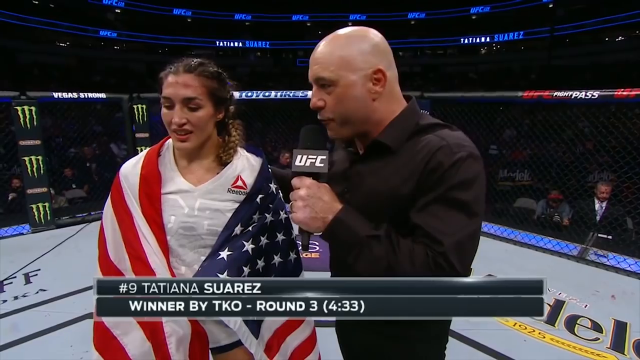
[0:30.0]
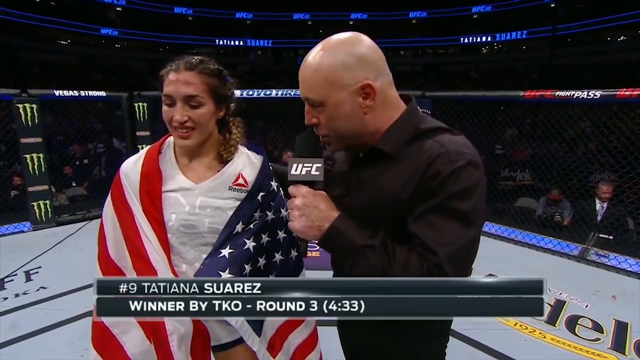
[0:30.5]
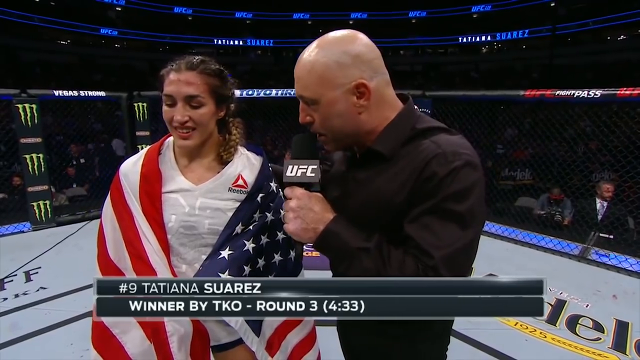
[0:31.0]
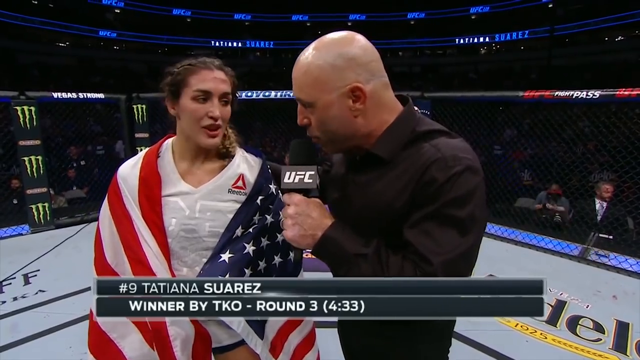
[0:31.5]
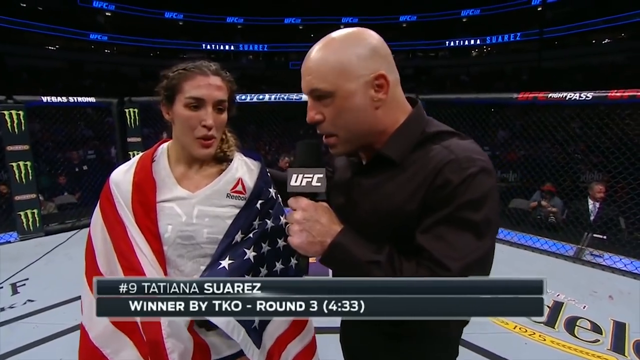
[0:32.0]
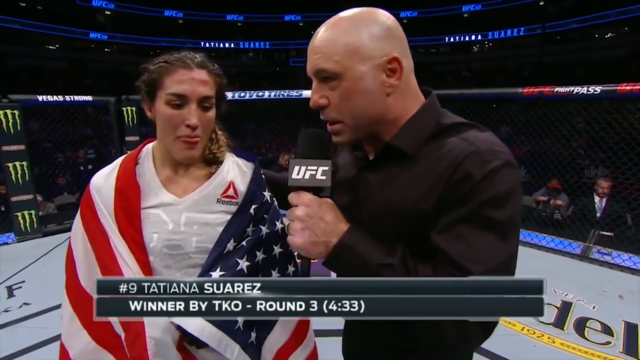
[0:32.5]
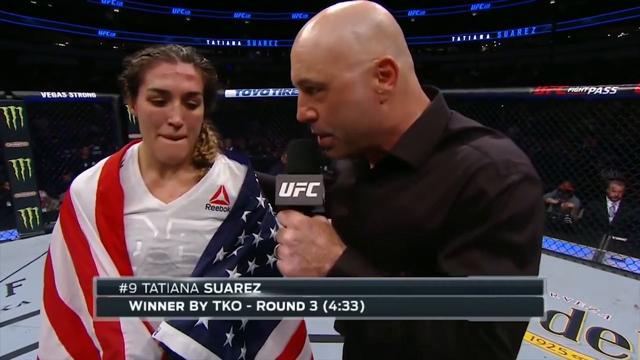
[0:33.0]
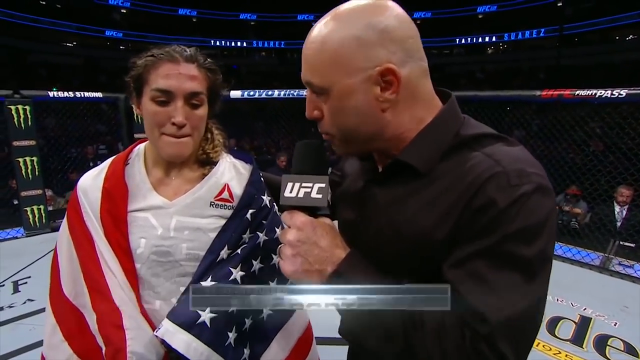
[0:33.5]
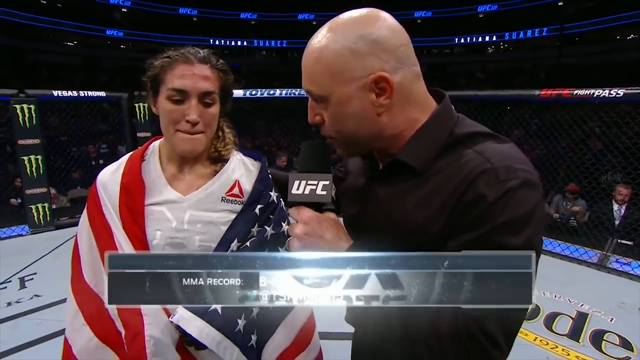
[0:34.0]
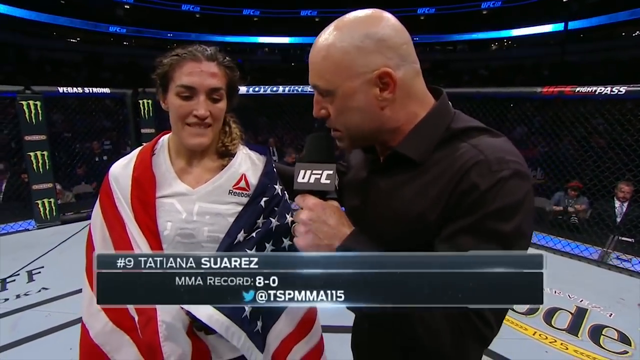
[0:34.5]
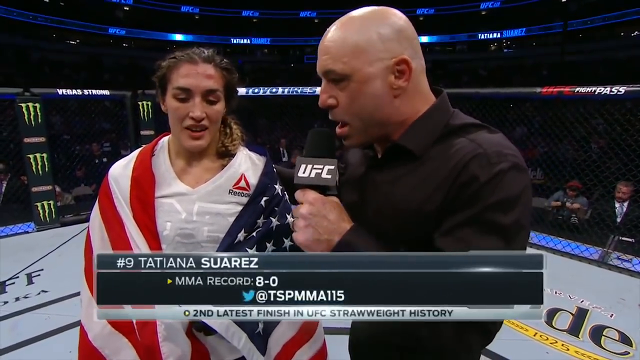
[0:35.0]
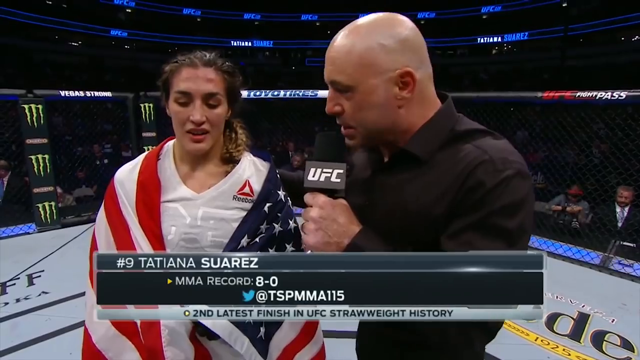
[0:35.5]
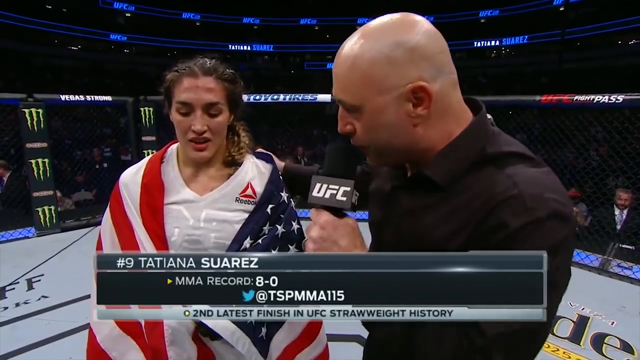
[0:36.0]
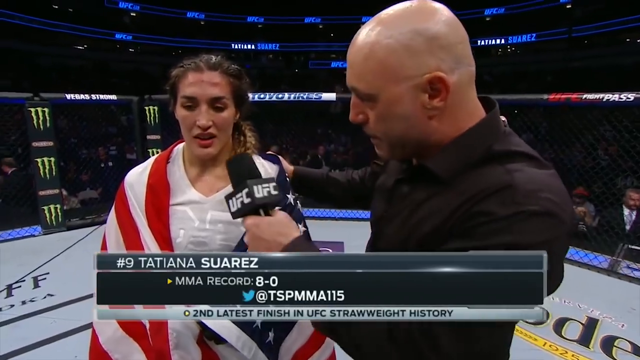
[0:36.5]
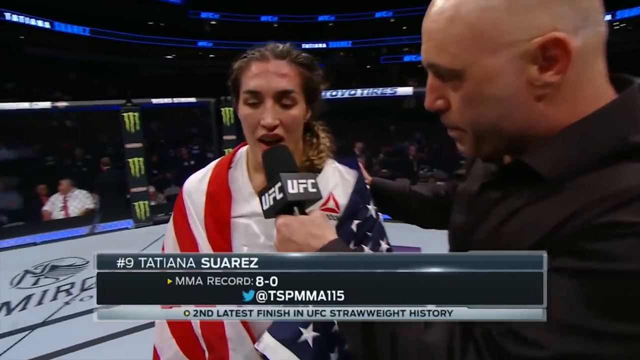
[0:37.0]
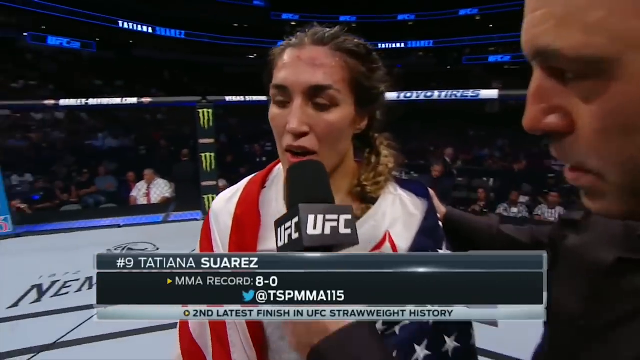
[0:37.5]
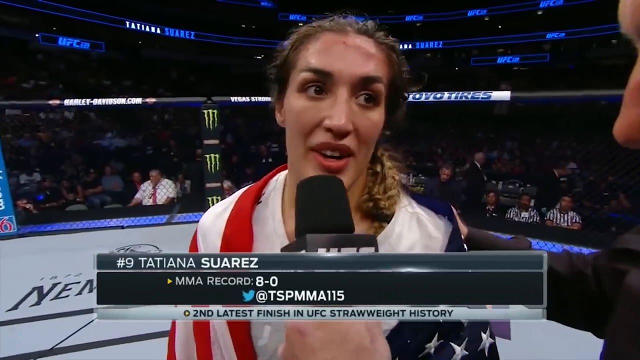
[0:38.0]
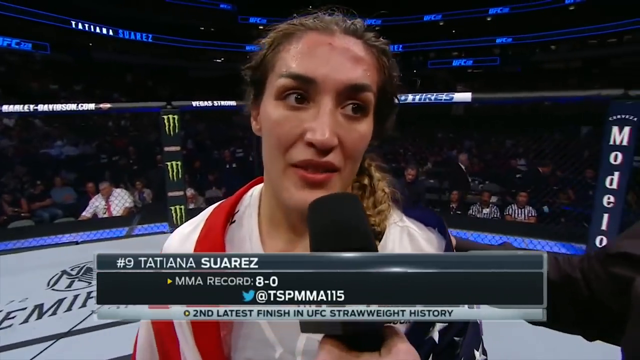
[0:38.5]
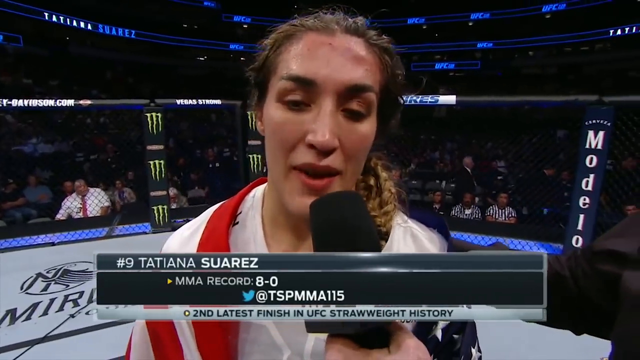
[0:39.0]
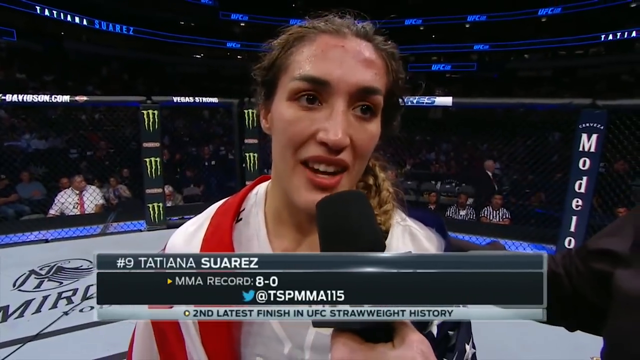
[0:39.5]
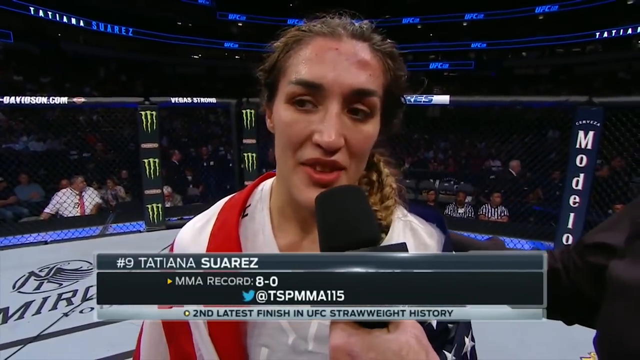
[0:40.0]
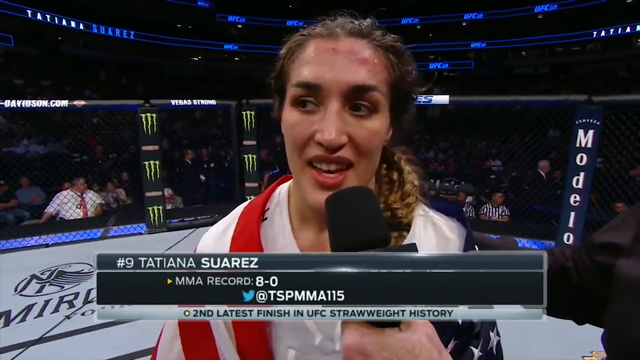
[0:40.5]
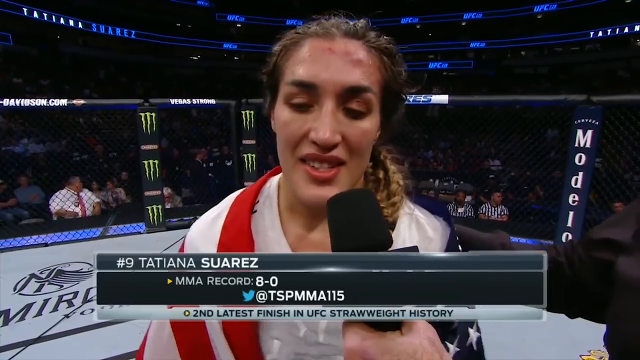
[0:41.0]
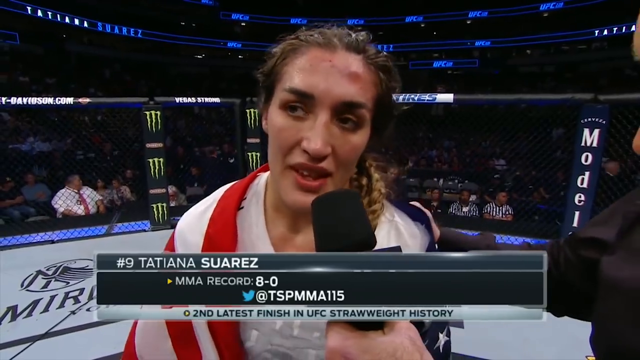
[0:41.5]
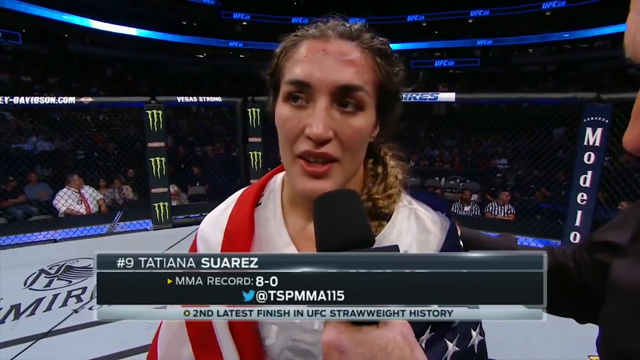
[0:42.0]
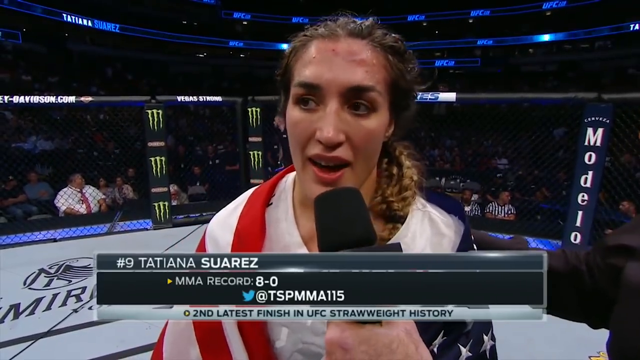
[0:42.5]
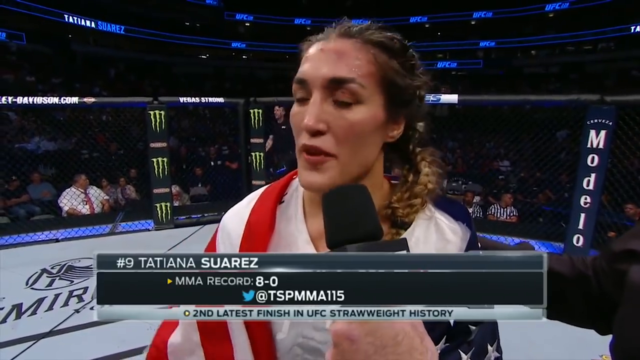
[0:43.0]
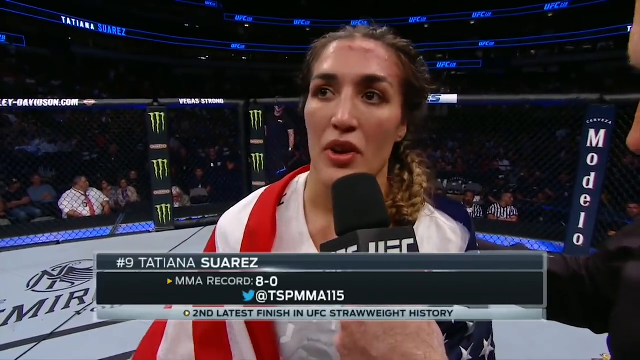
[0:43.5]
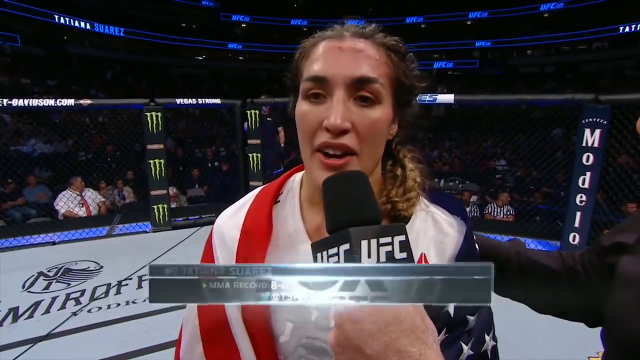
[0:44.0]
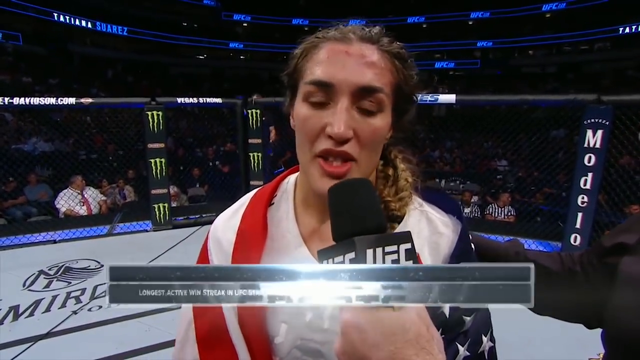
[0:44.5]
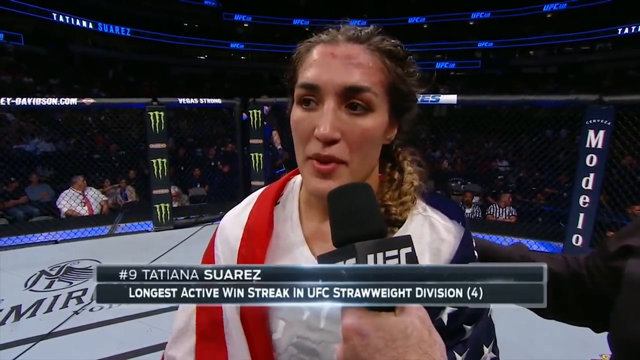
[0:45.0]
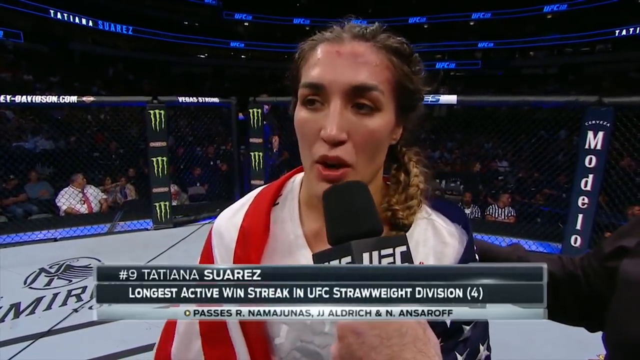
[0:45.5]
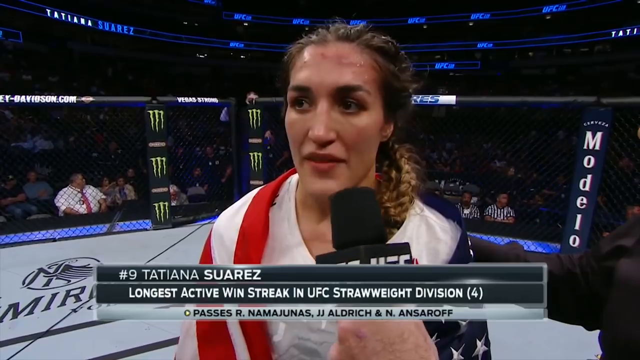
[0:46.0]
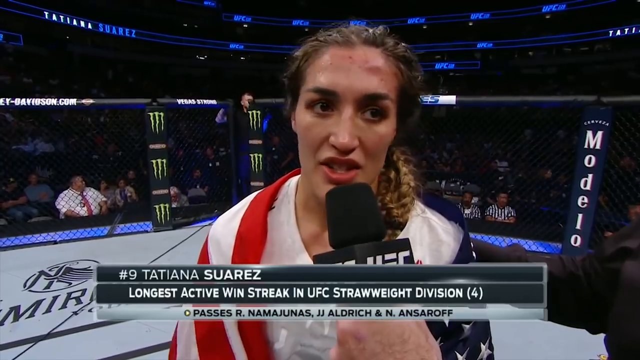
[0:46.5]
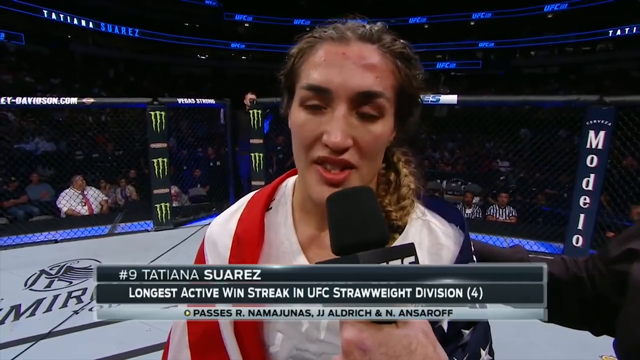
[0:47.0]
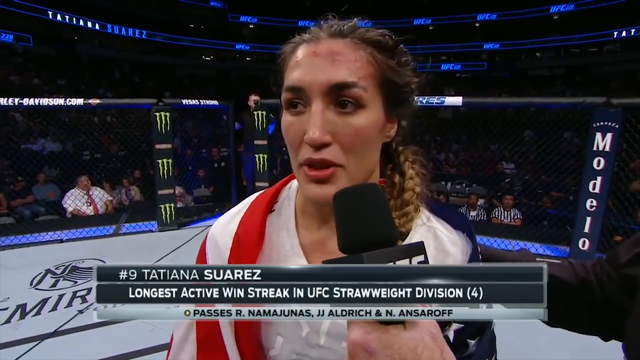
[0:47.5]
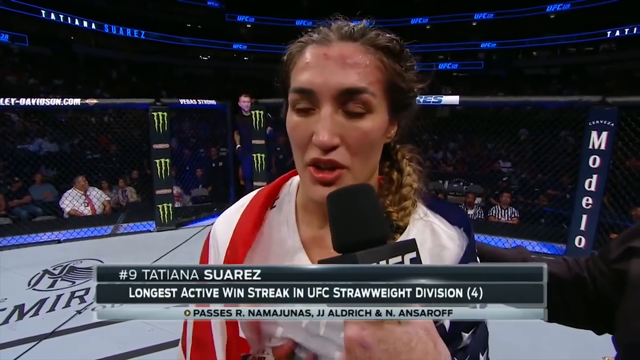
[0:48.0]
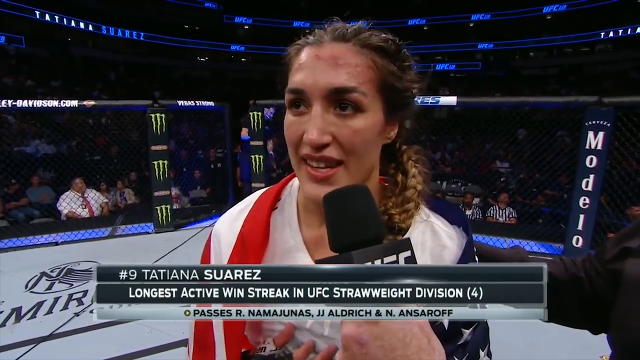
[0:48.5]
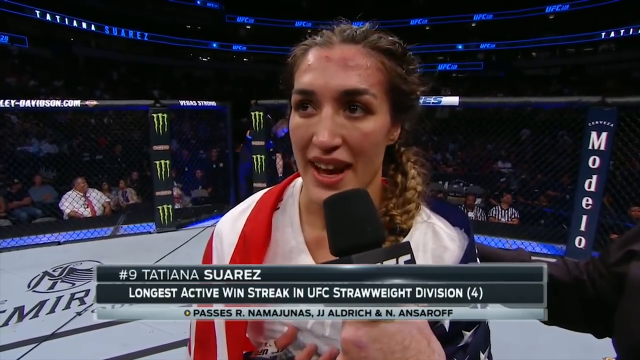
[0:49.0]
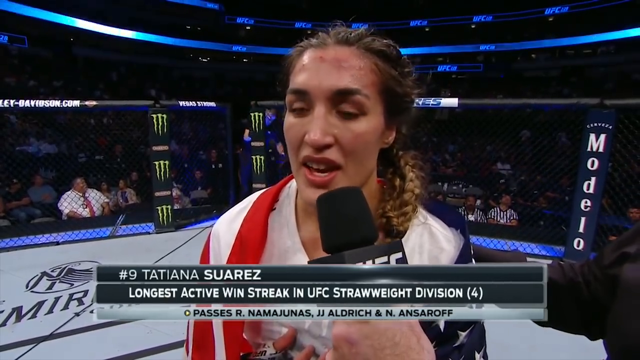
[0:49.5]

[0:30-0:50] The announcer, Joe Rogan, in a black button-down shirt, holds the microphone in his left hand and talks to the winner to his right, Tatiana Suarez, shown with an MMA record of 8-0 and a blue Twitter logo with the handle TSPMMA115. Text reads "longest active win streak in UFC's strawweight division" with a four in parentheses. She wears a white V-neck shirt with a triangle-like "Reeboks" logo on her upper left chest, and her kind of curly hair is pulled back into a ponytail. In the top left, blue neon lights spell "Tatiana Suarez". At the bottom left, outside the cage, a large man sits in a white shirt with what looks like a red tie. "Modelo" appears on the right side of the screen, on what looks like a turnbuckle. While the winner talks into the microphone, which has a black windscreen, a box at the very bottom reads "Second latest finish in UFC's strawweight history."